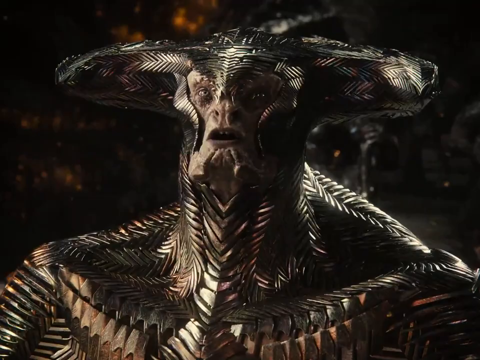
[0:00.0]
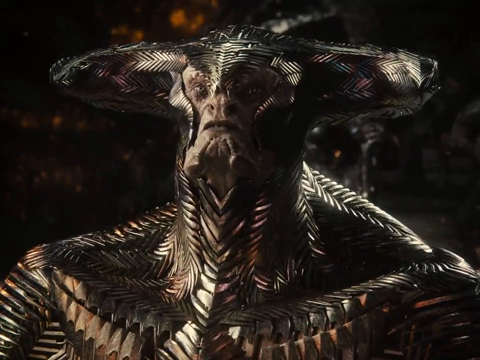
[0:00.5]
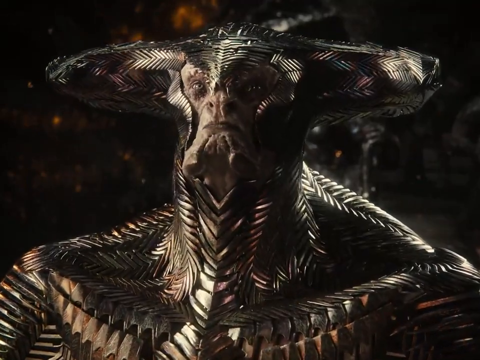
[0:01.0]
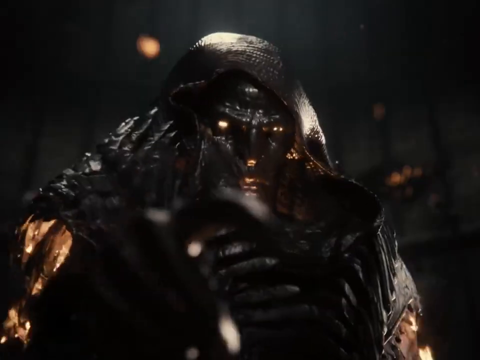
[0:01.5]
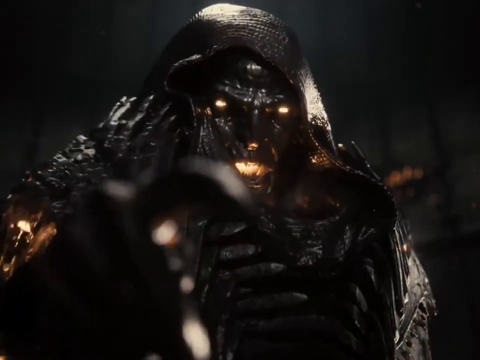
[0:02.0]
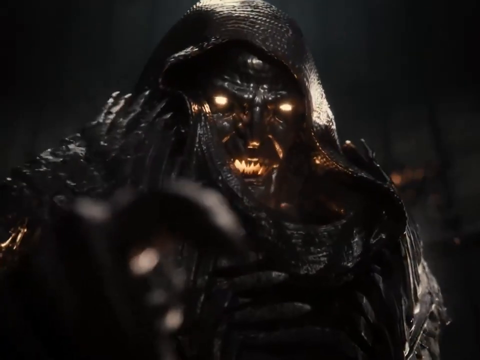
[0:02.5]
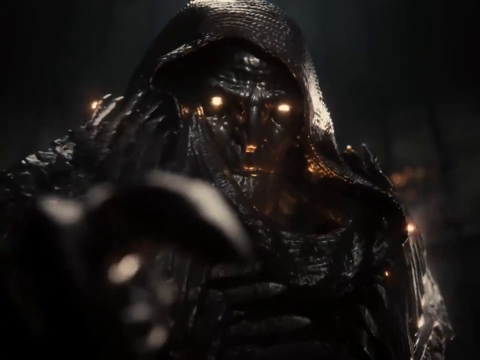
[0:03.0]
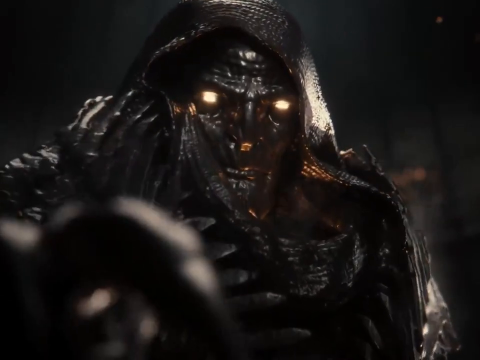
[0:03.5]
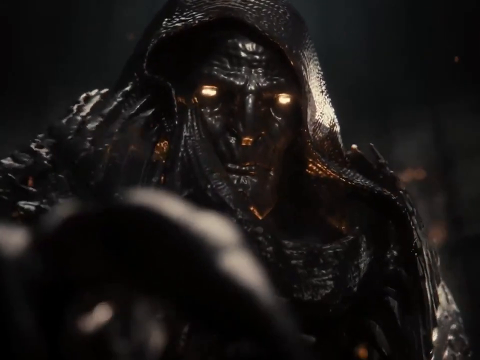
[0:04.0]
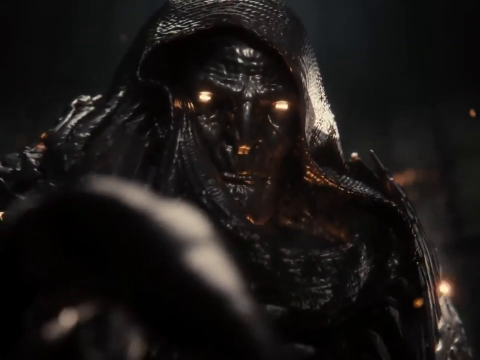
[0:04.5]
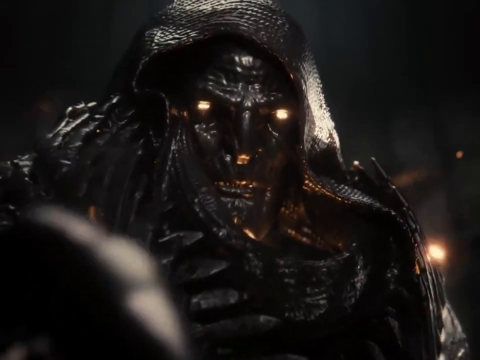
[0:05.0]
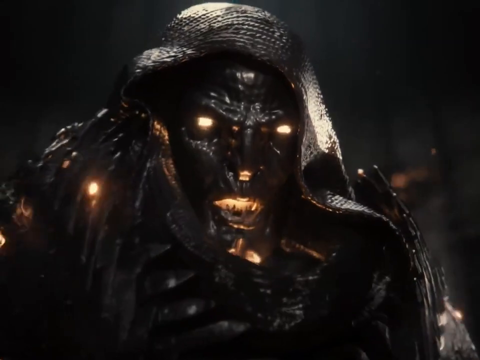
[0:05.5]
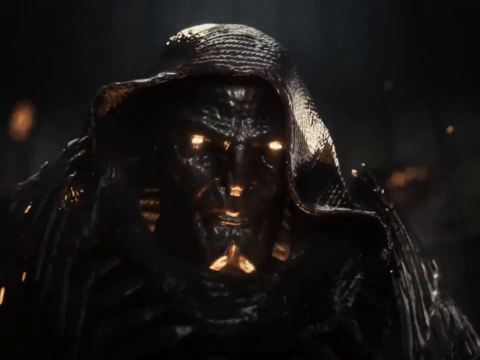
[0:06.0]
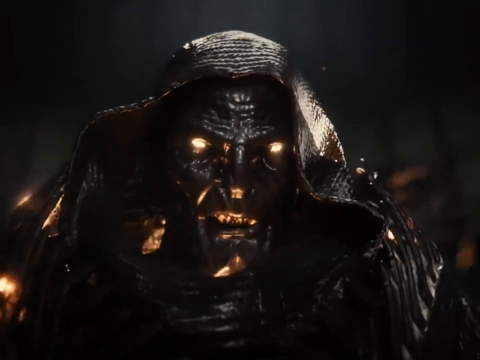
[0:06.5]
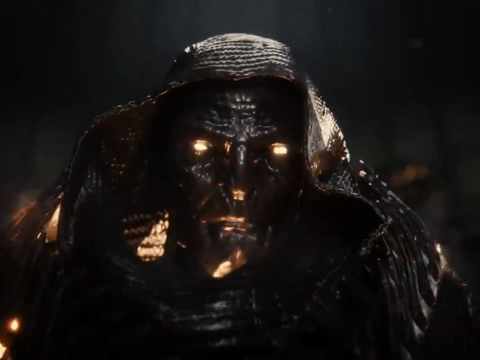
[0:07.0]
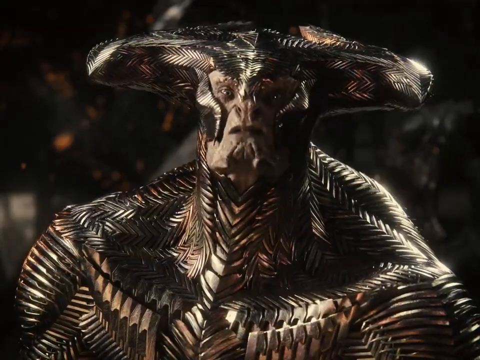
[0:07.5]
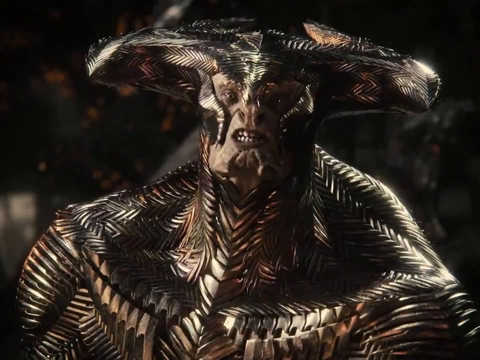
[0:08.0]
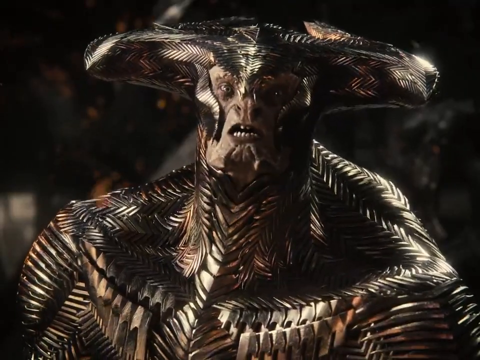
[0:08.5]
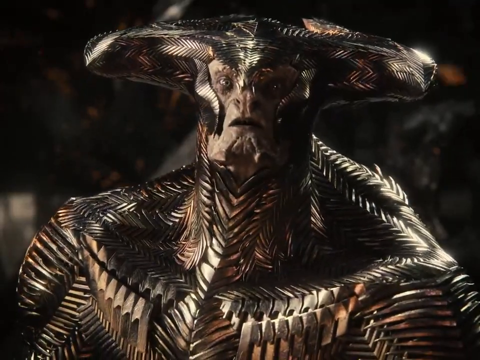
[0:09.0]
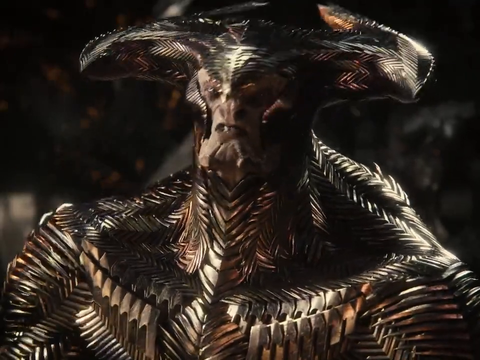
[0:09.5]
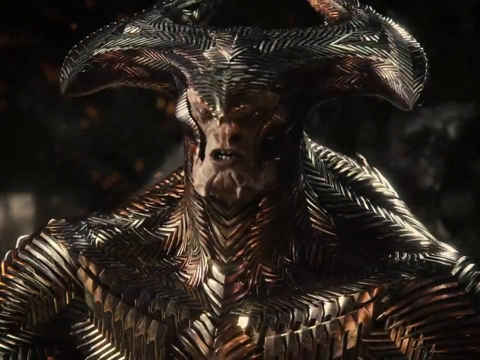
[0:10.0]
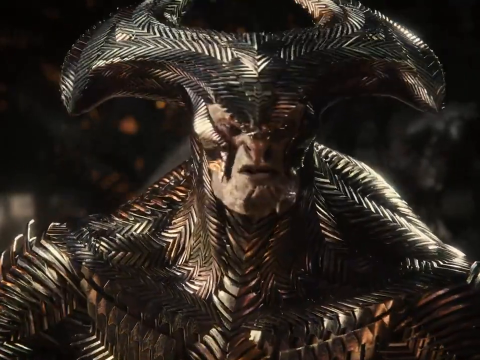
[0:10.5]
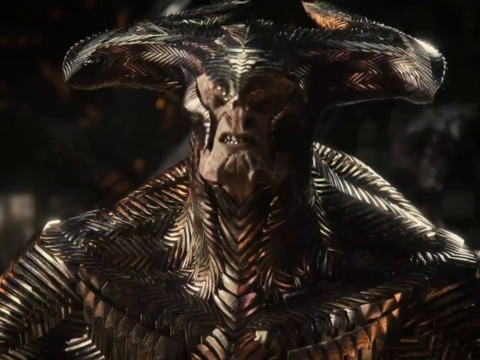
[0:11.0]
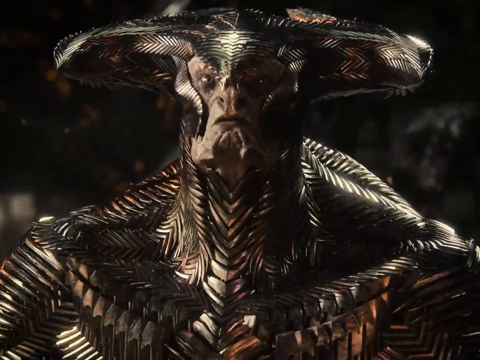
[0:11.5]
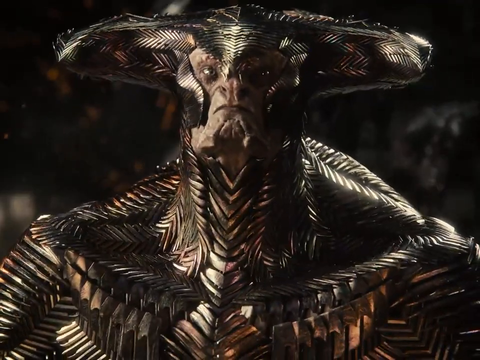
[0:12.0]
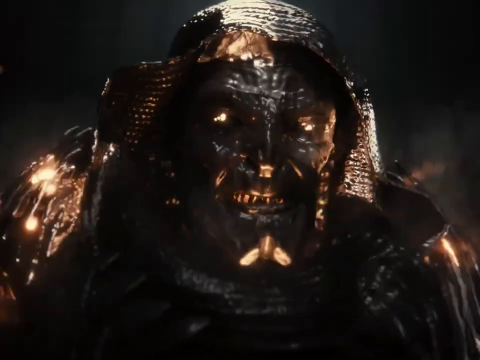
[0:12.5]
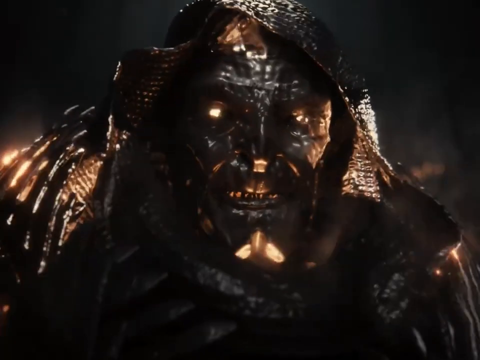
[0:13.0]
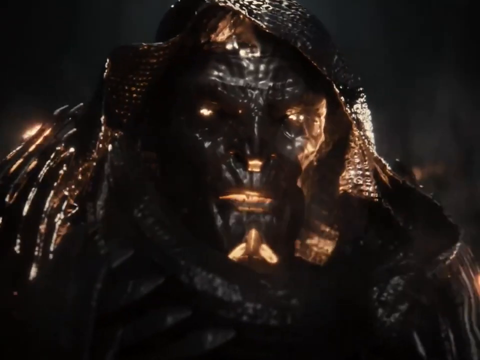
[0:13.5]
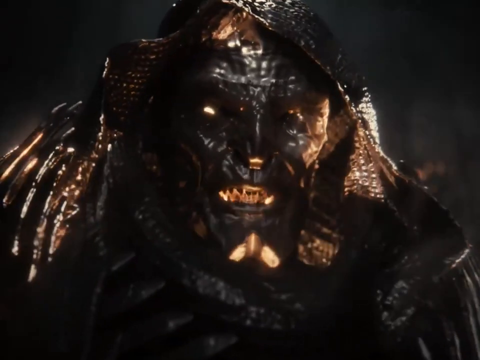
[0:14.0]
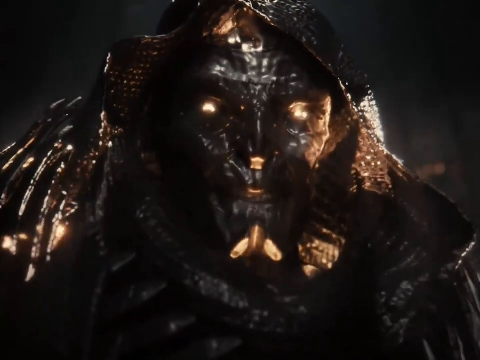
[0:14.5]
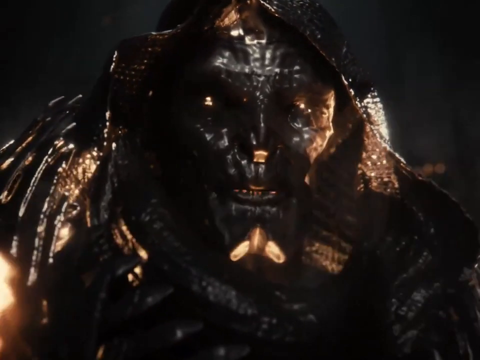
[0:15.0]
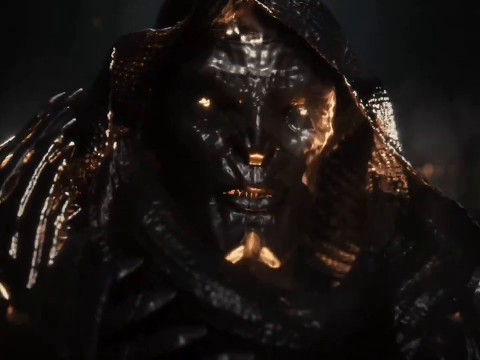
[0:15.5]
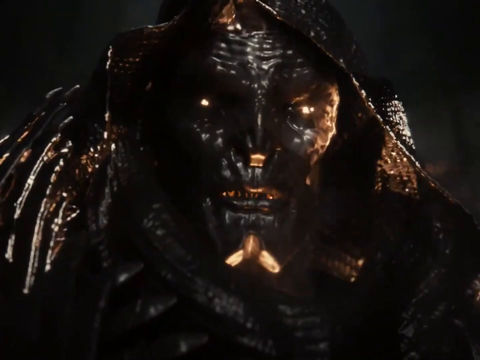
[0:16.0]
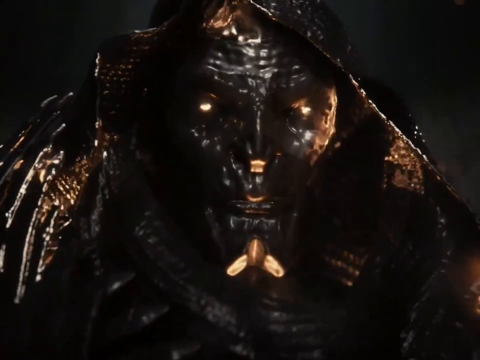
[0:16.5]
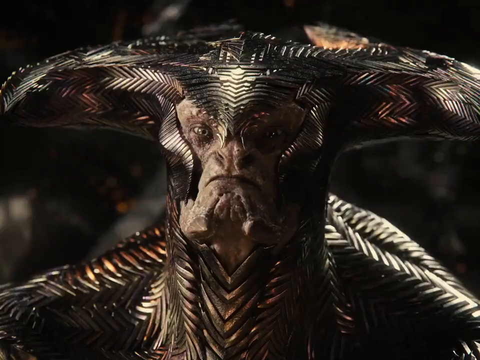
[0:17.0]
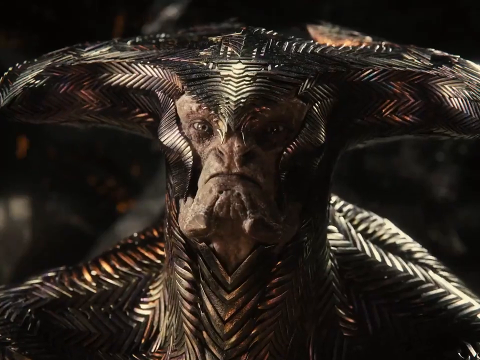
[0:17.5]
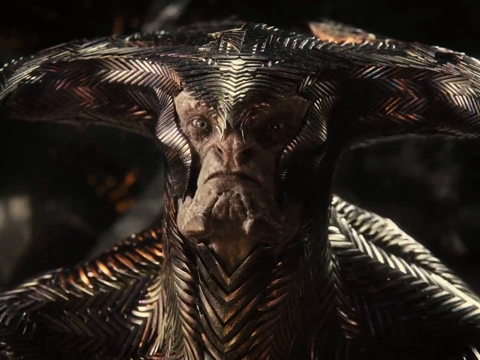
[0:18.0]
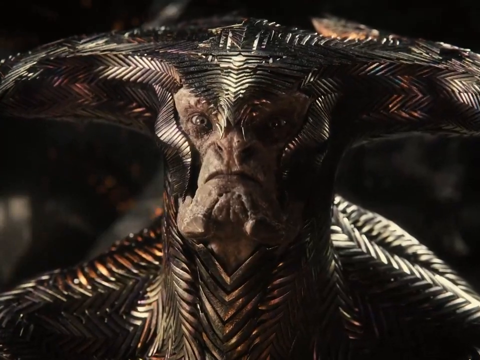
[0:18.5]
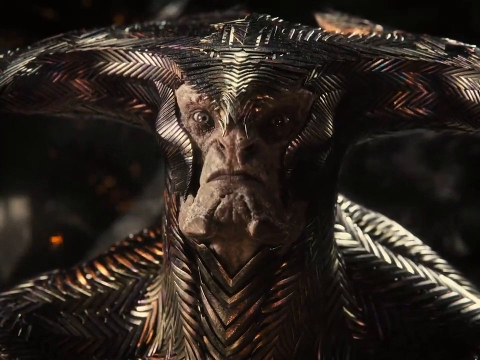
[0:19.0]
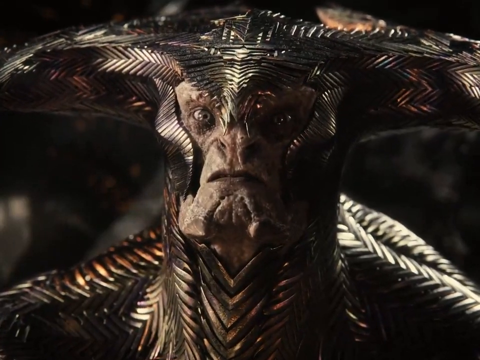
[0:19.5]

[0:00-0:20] What looks like a movie, or possibly a series, shows what looks like a villain talking to another villain. The first villain looks alien-like, with a gold kind of skin that is like armor and has scales. On top of the head is a helmet that is wide and disc-like in a horizontal direction, like a plate or a hat. He wears a mask, and the mask and the armor all have gold scales. His skin is very worn and old, as if he is hundreds of years old. The other villain looks sort of like the Grim Reaper, almost, but has eyes and a mouth of fire inside. It has a head and a cloak; the cloak is sort of an armor and looks leather-like, almost like animal skin, and almost reptilian.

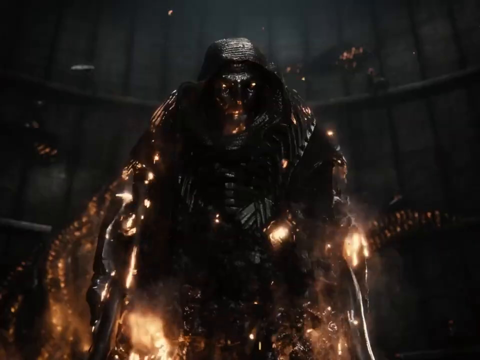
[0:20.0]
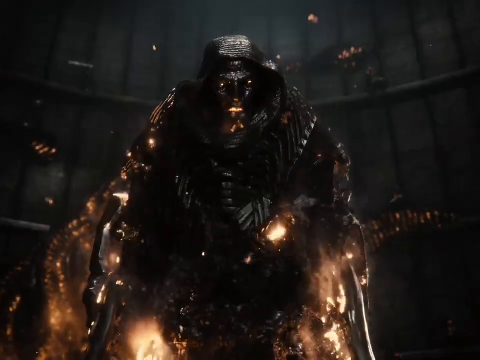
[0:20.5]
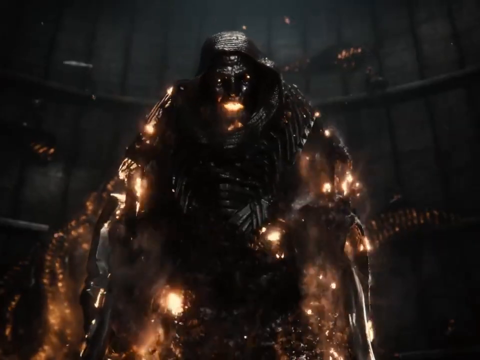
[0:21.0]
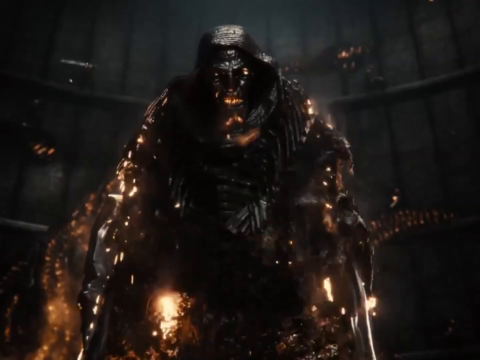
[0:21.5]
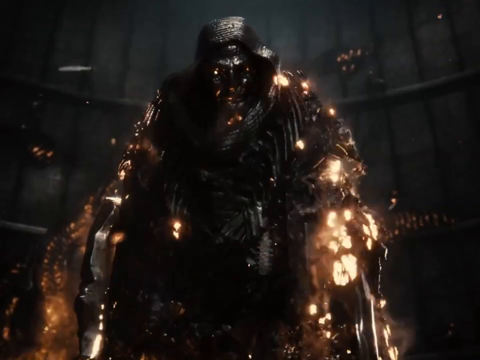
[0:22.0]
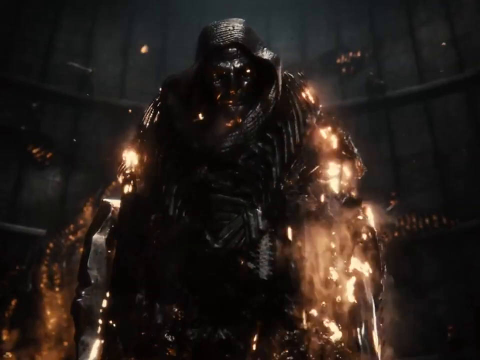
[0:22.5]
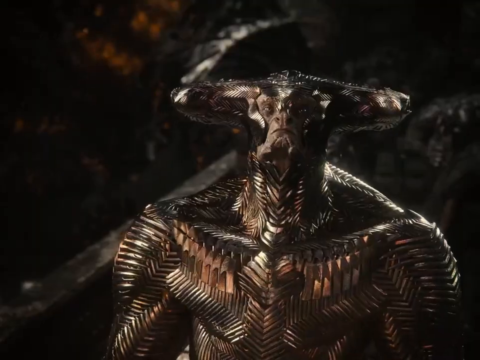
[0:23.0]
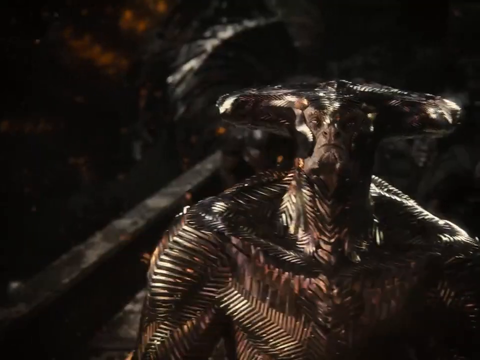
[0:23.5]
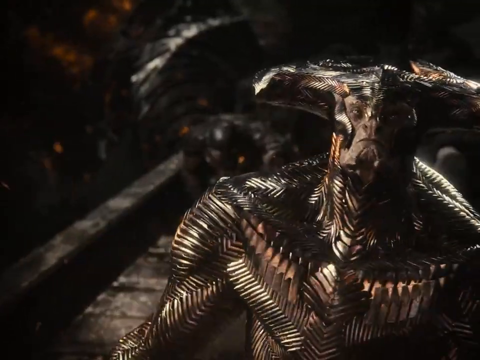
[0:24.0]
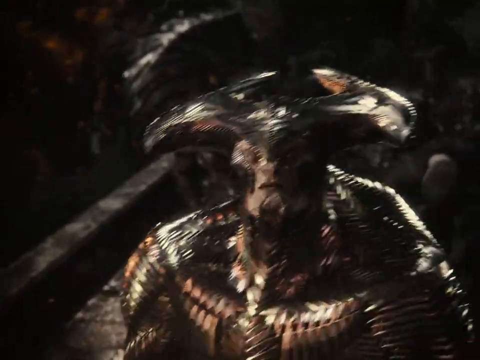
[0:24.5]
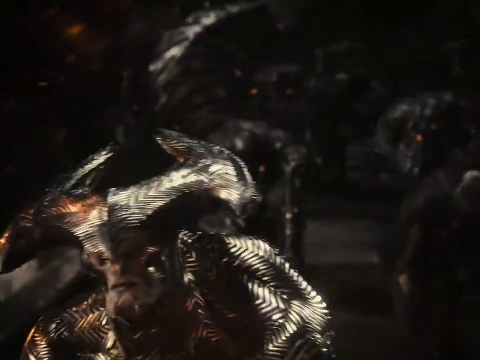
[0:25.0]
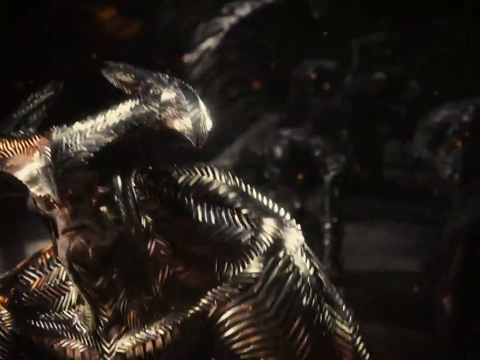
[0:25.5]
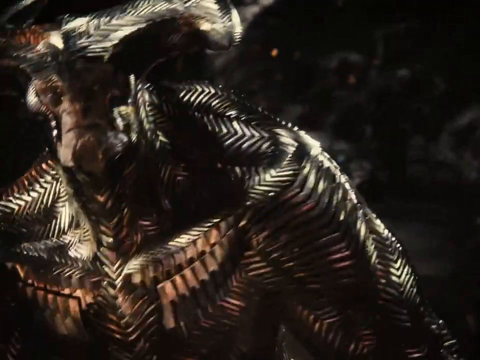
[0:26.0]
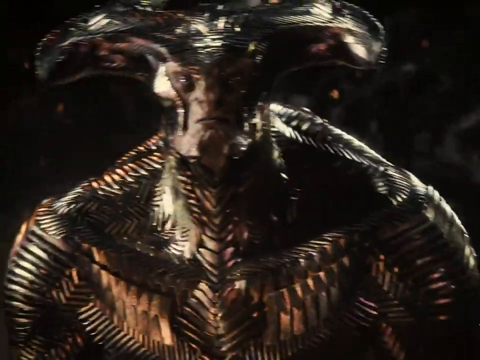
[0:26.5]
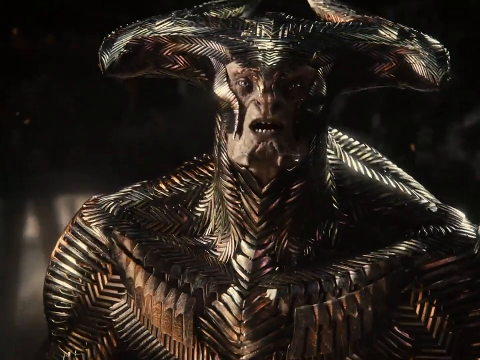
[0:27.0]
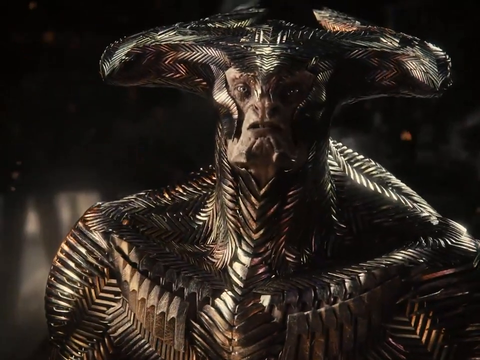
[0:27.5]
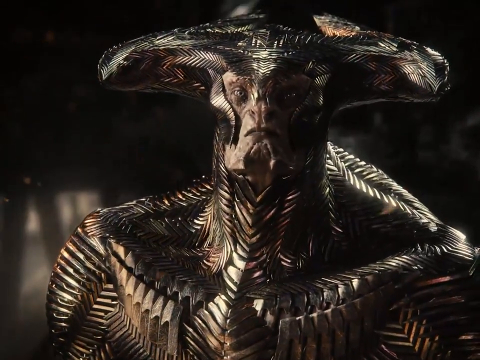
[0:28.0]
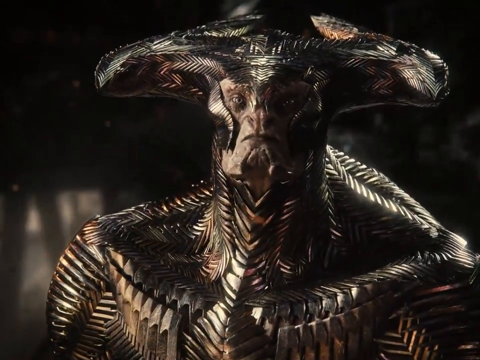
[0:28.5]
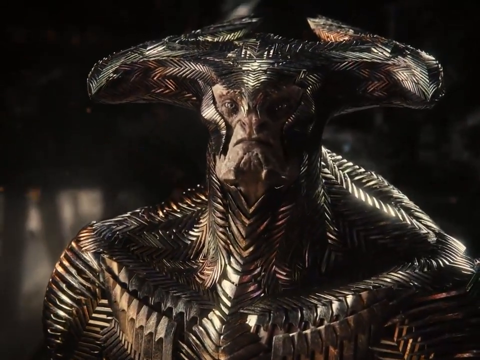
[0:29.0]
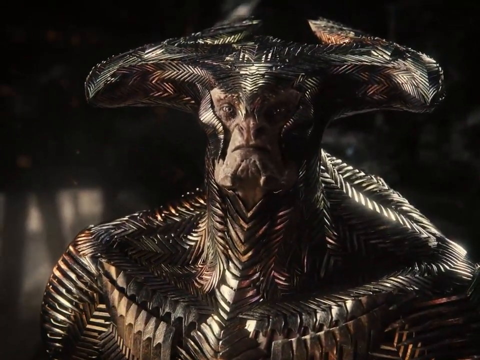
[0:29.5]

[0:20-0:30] The scene, which looks like it is from a movie, continues with two villains talking. The first villain has gold-like, scaly kind of armor. His head has horns that are bent backwards toward the back and center of the head. He is a very muscular beast with gold scaly armor around him, and his face looks really old and sinister. He is talking with another villain who seems much larger. This villain is dark, with eyes and a mouth of fire inside, and wears a black hood and cloak that look scaly, almost reptilian. They are in a dark, dome-like place, and the only light in the scene comes from the fire inside the second villain. The two do not look too happy.